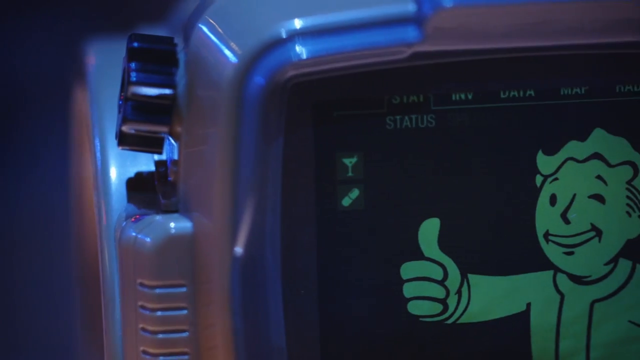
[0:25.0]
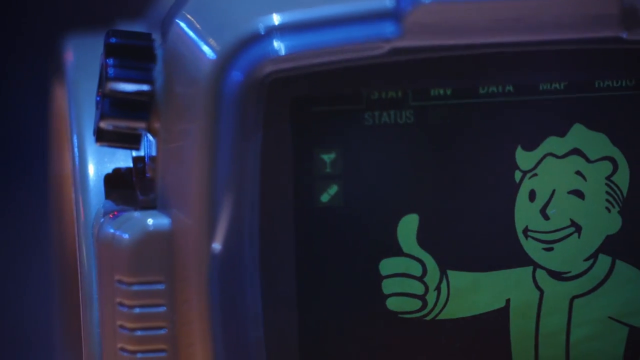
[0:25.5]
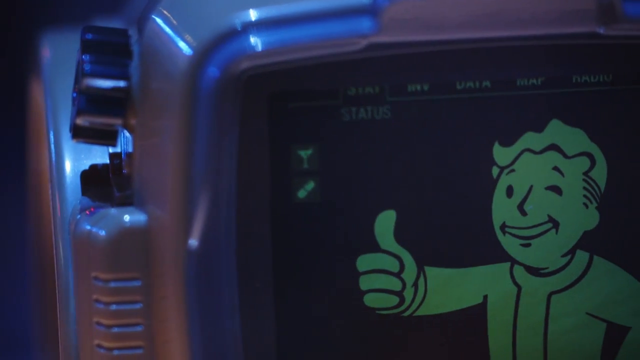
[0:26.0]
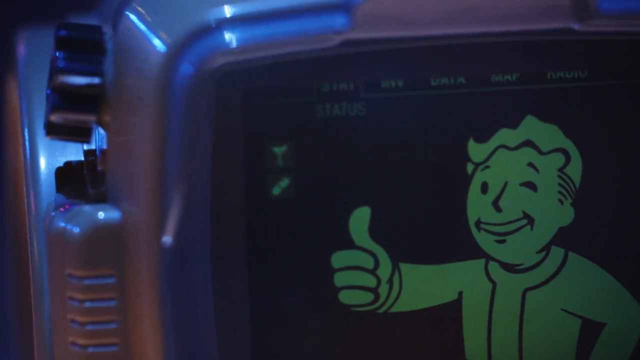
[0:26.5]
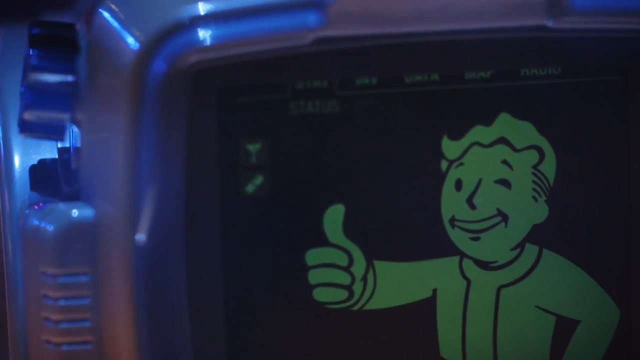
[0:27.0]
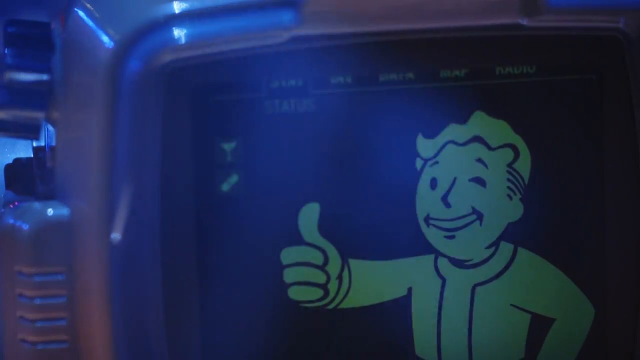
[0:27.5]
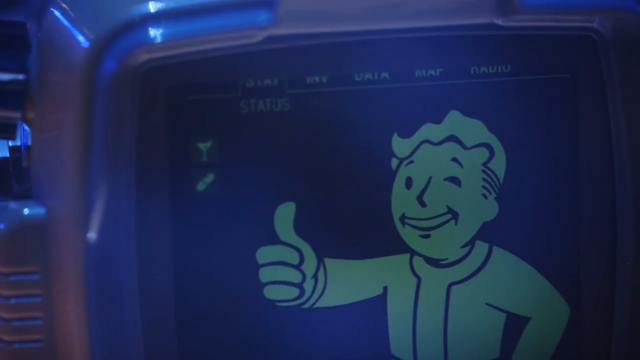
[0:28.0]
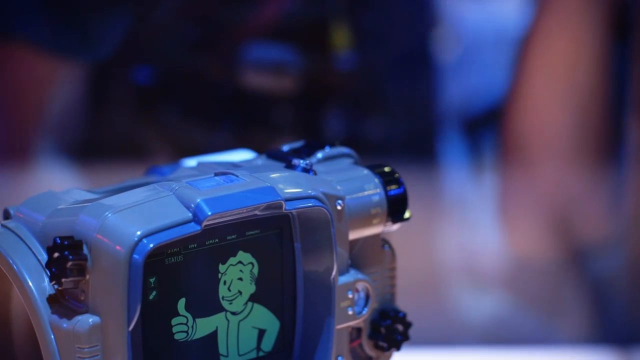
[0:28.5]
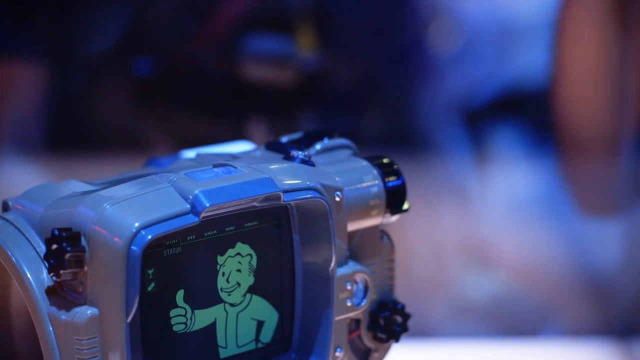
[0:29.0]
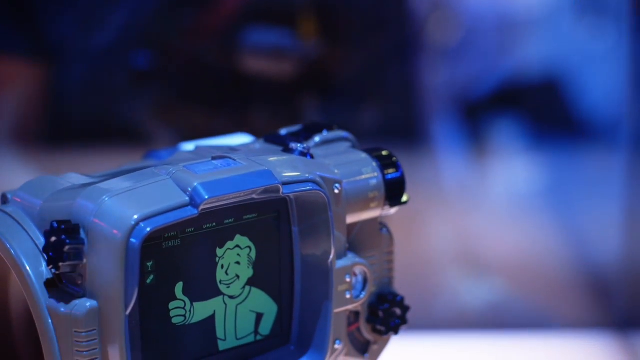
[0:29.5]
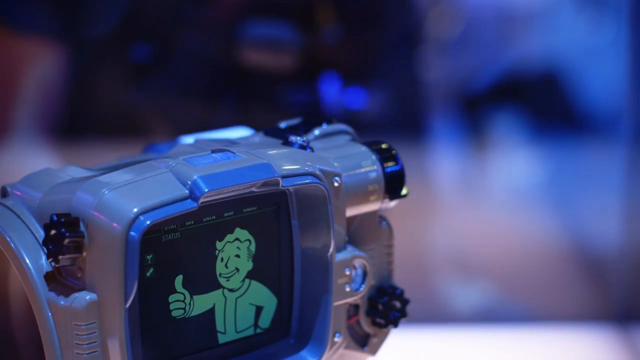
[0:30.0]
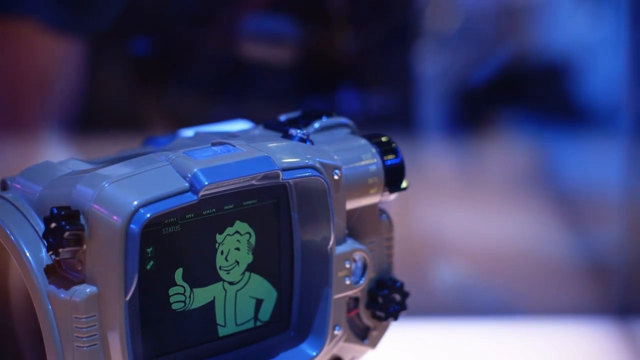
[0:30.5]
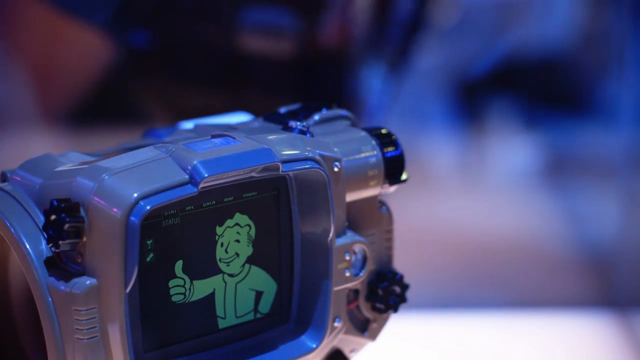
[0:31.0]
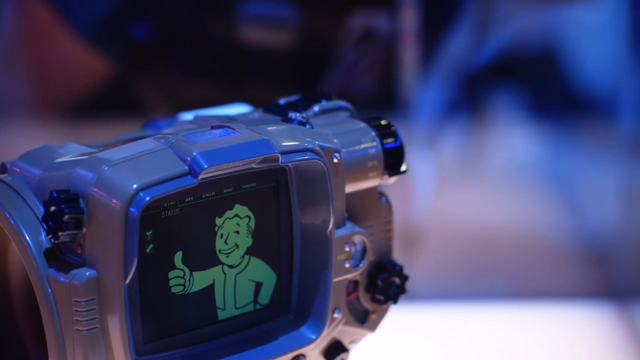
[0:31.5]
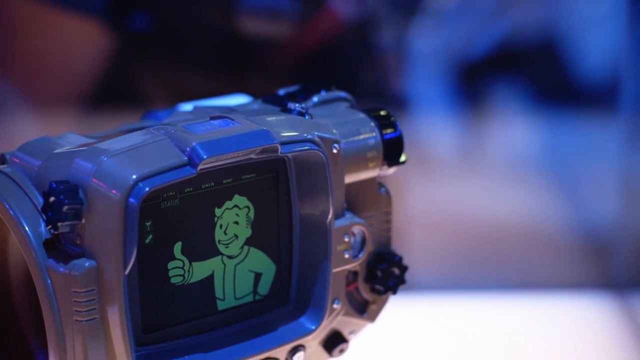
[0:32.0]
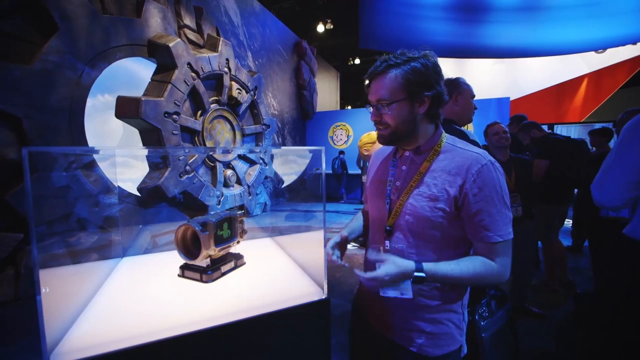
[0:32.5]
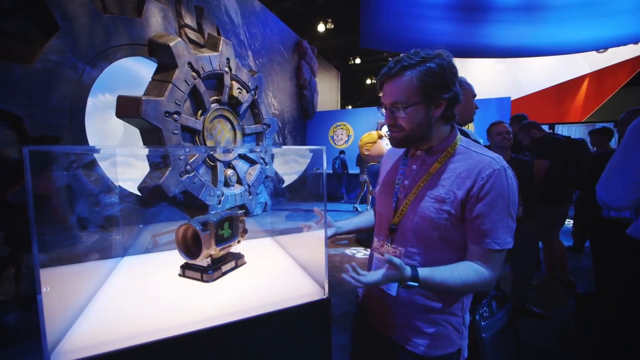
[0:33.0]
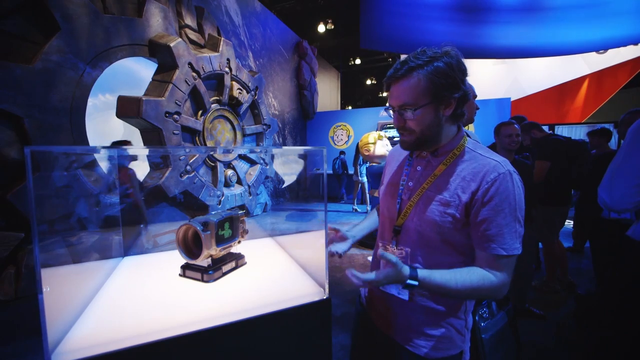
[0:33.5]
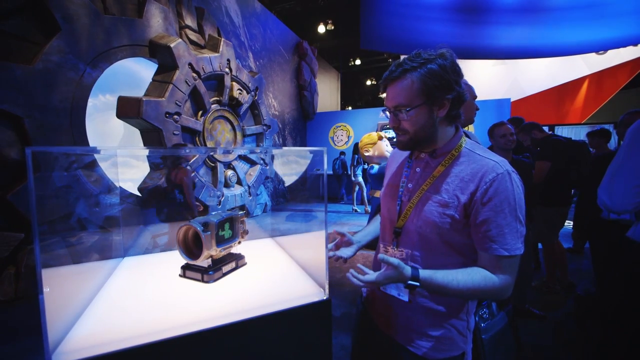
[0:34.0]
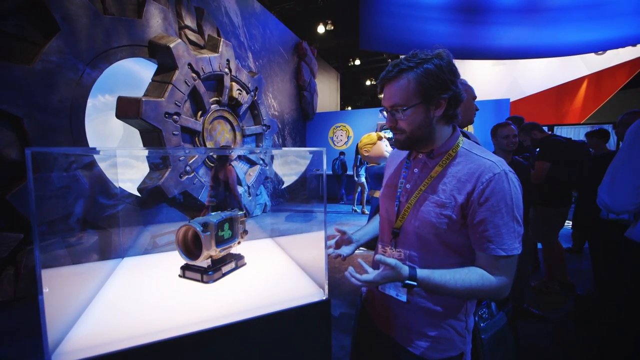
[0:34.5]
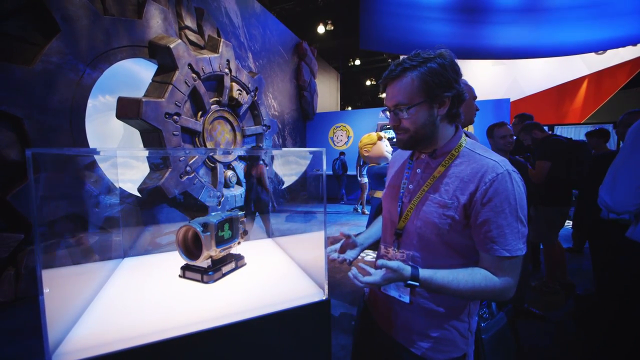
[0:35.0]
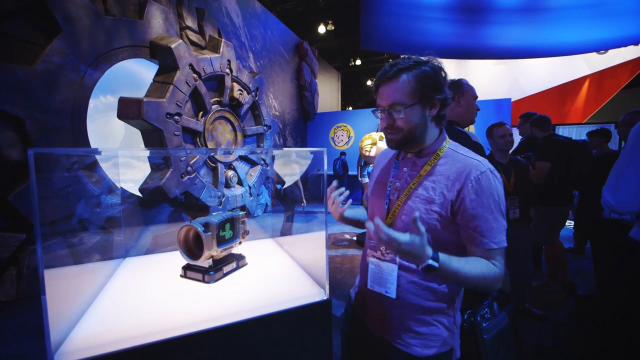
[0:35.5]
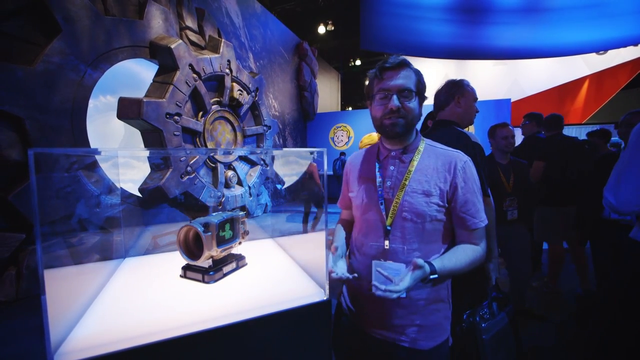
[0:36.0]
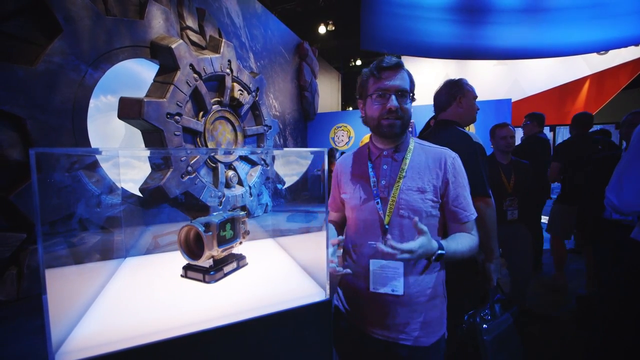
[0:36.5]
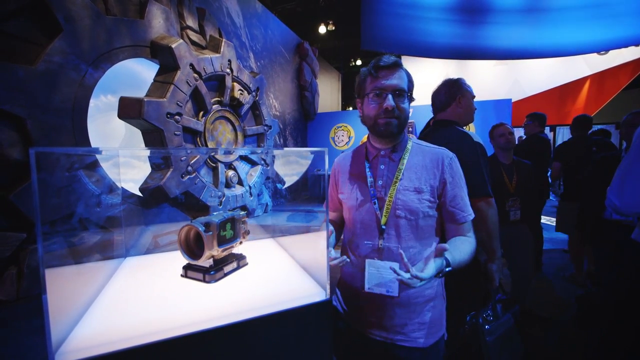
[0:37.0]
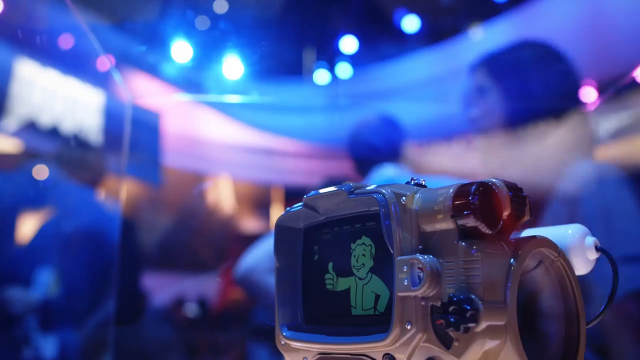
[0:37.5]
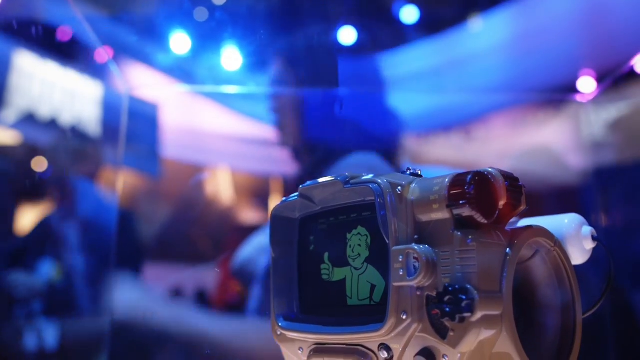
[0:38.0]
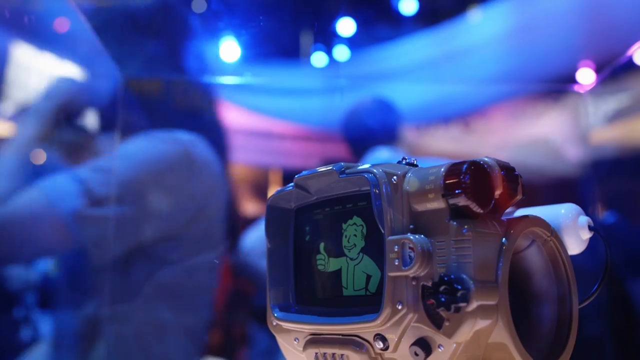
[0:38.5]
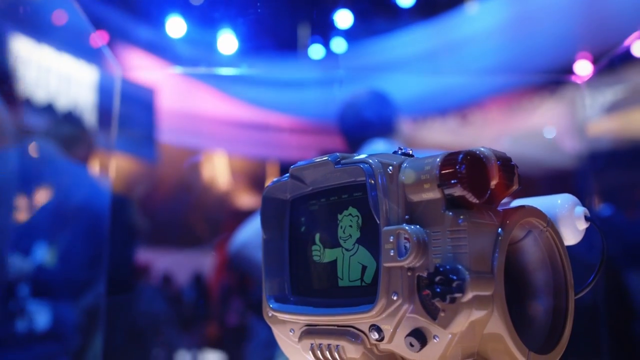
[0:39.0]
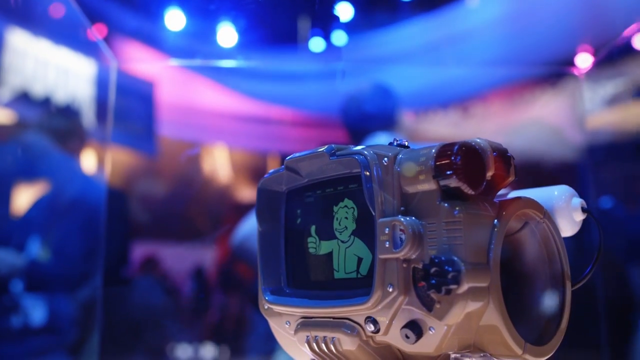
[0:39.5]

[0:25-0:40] A green character with a thumbs up is pictured on a gold device. A man looks at the box while speaking to the camera. A person walking past rubs her nose, and another person walks past. "Status" appears, followed by a black screen and the green character with a thumbs up. The man wears a black watch and a lanyard with a white card with white writing in it. The gold device is in a clear box. A woman holding a black bag walks past, another person walks past rubbing their nose, and a person in a white shirt walks past. In the back is a window with a picture of the sky, and four lights are visible in the ceiling. A person in a short-sleeved shirt bends over the box. A woman in a gray shirt is there, and a man talks to the camera.